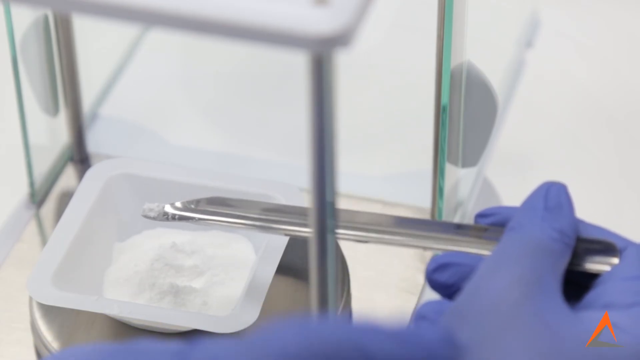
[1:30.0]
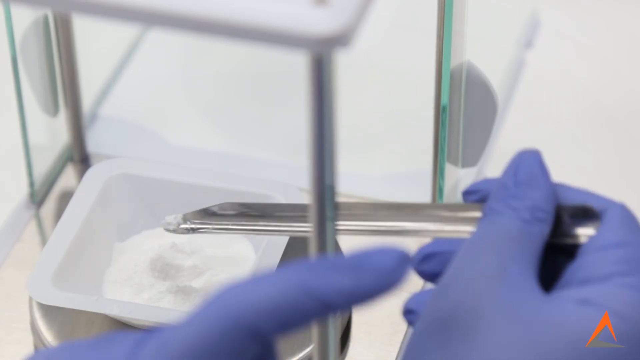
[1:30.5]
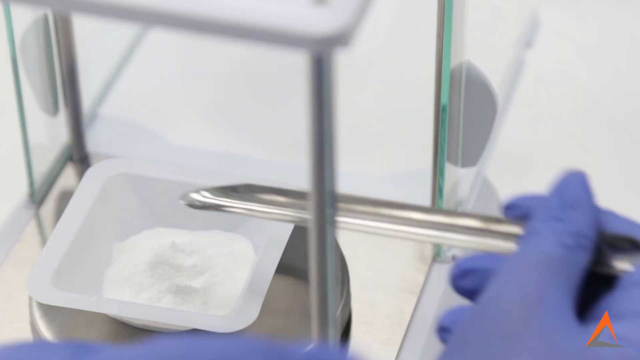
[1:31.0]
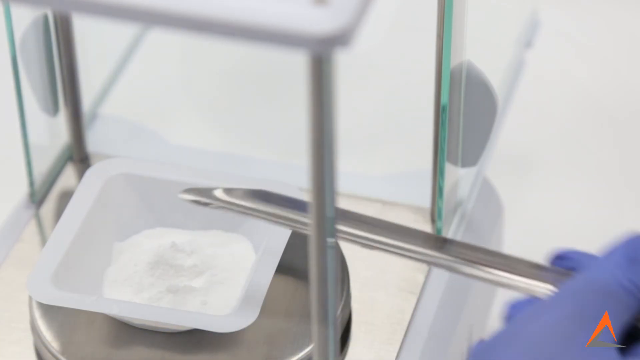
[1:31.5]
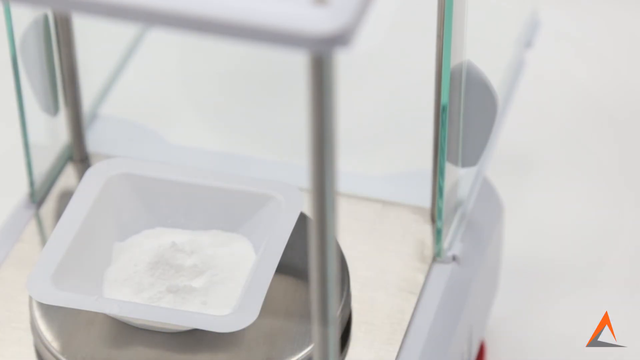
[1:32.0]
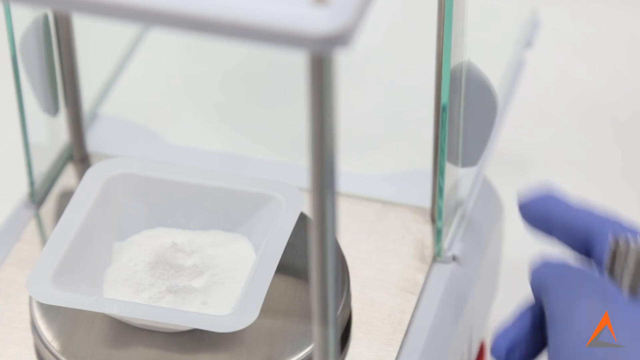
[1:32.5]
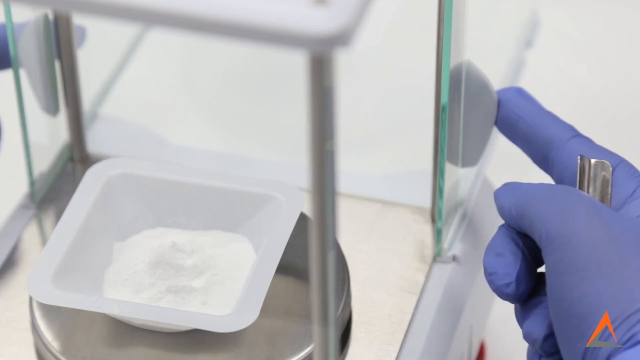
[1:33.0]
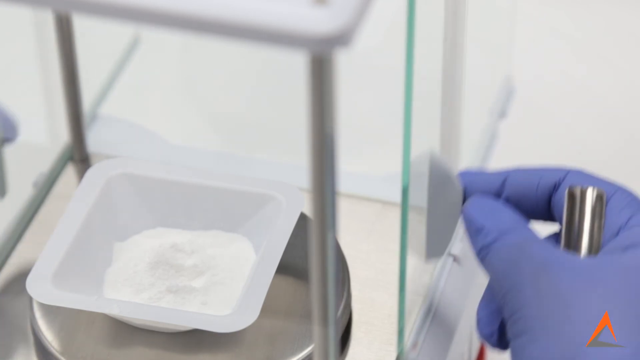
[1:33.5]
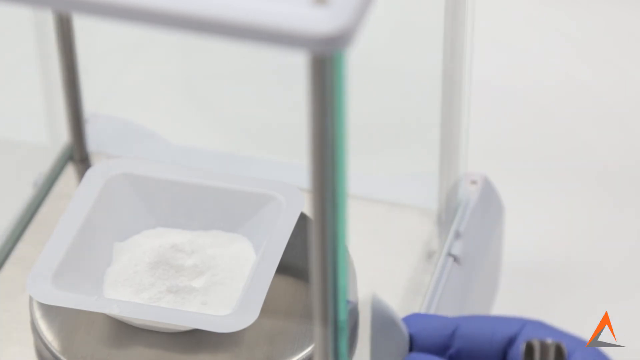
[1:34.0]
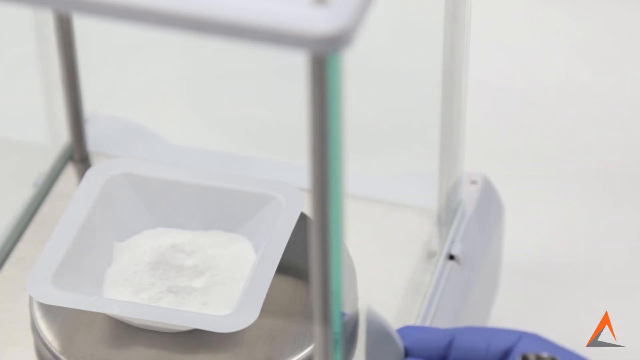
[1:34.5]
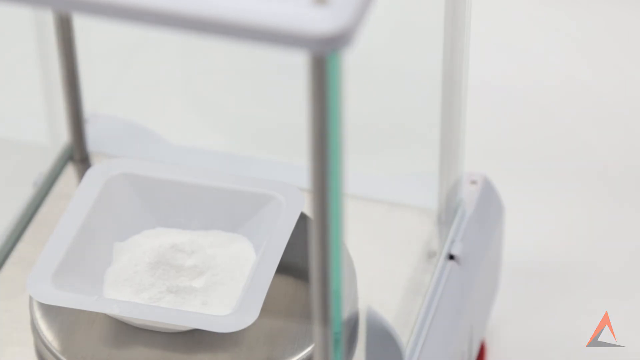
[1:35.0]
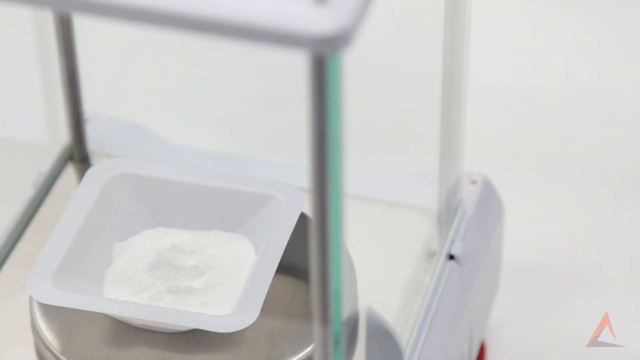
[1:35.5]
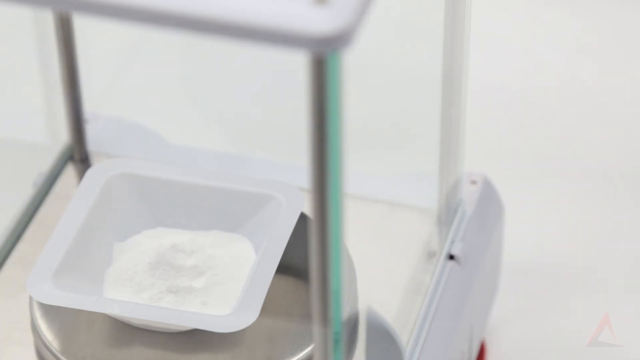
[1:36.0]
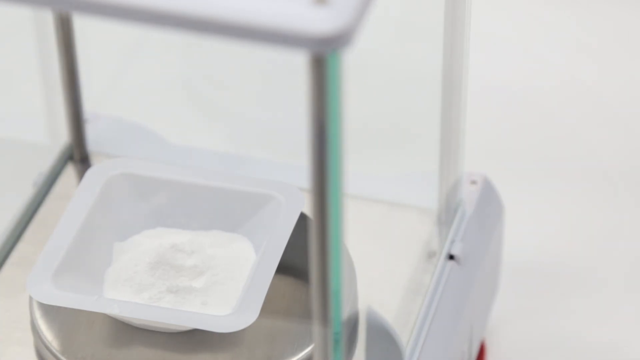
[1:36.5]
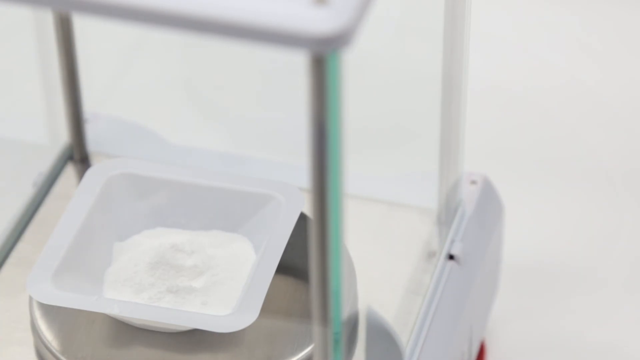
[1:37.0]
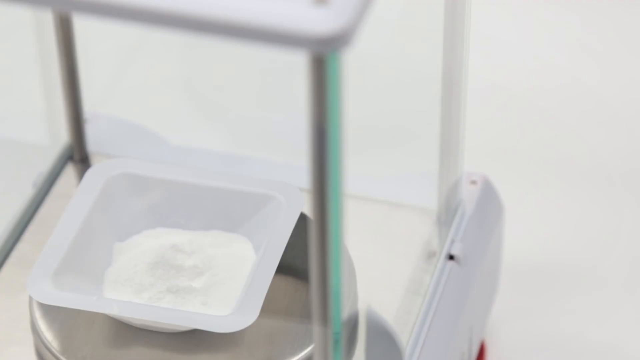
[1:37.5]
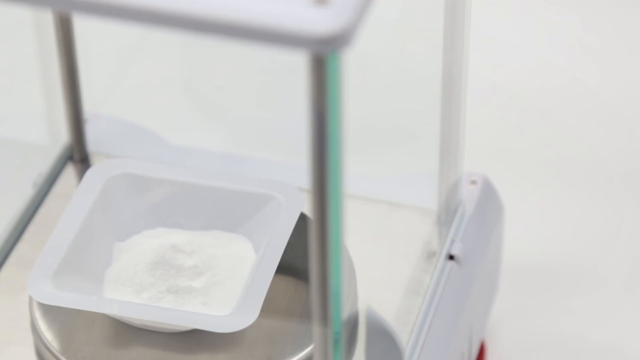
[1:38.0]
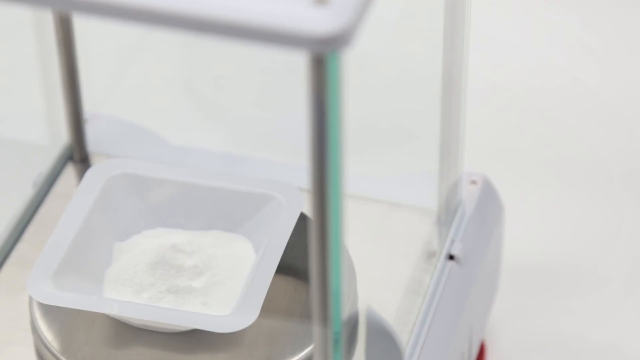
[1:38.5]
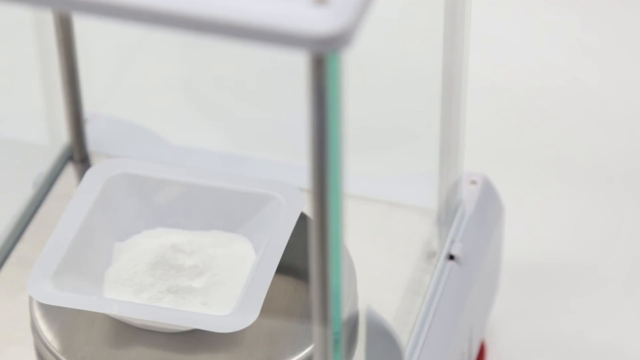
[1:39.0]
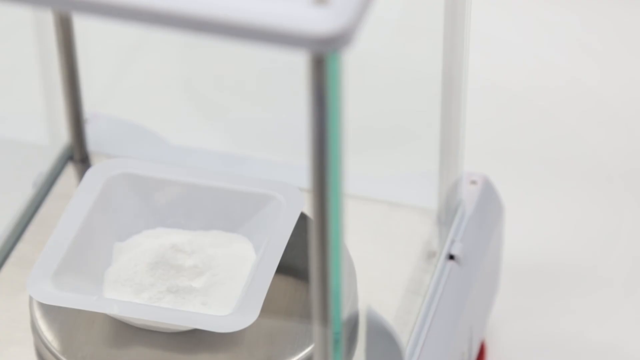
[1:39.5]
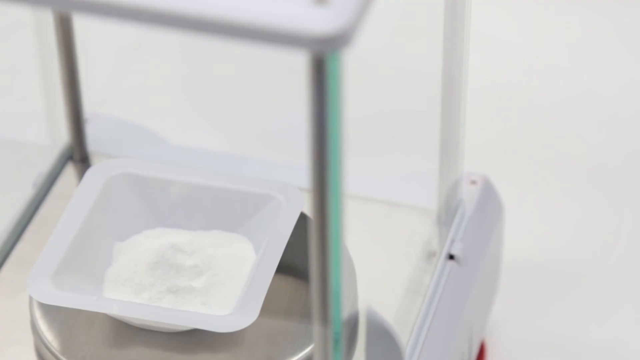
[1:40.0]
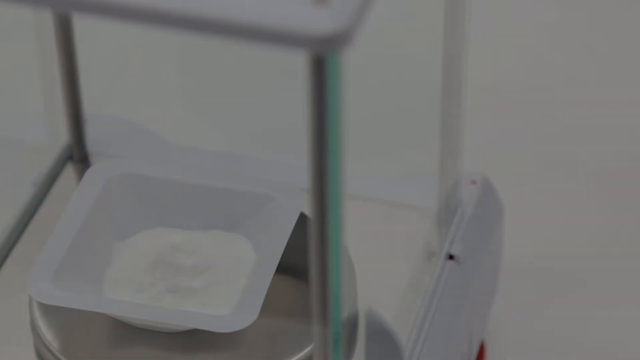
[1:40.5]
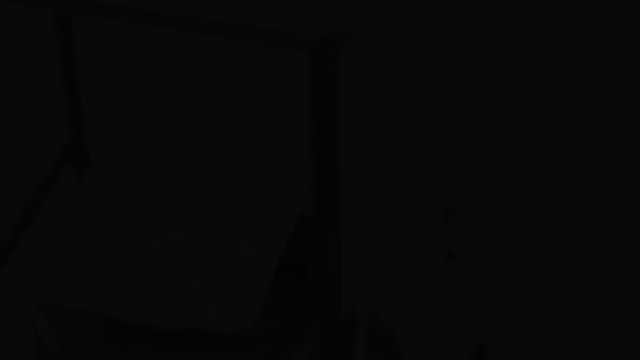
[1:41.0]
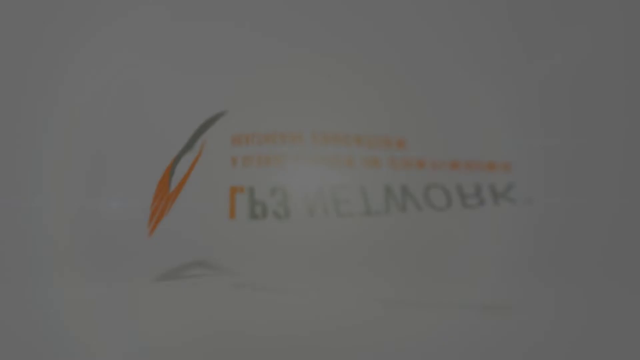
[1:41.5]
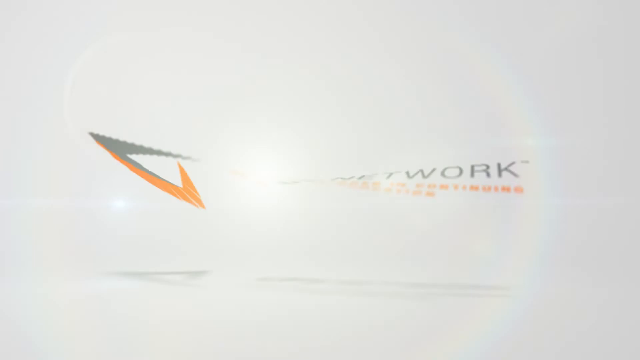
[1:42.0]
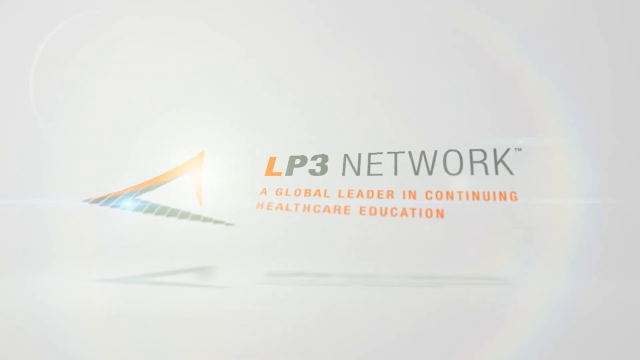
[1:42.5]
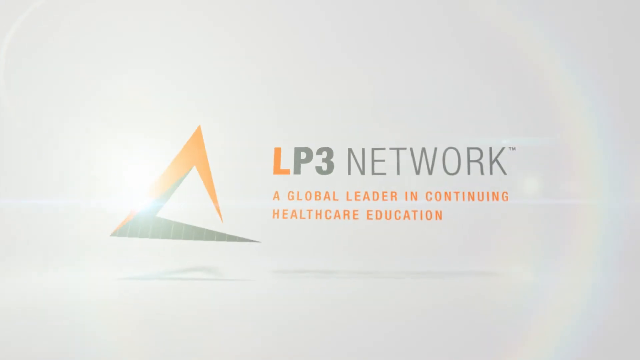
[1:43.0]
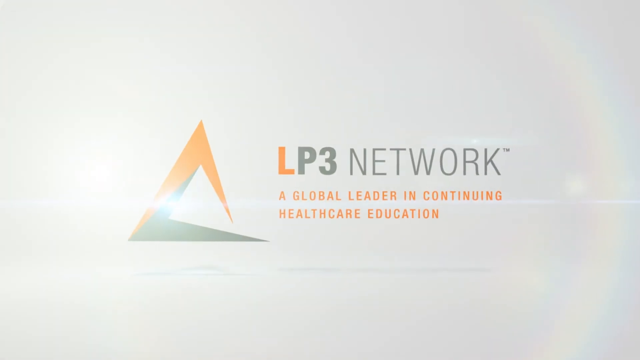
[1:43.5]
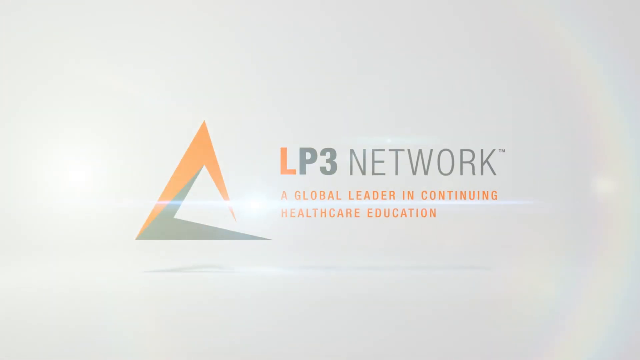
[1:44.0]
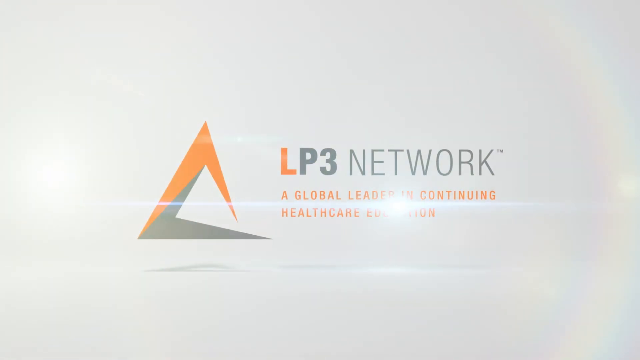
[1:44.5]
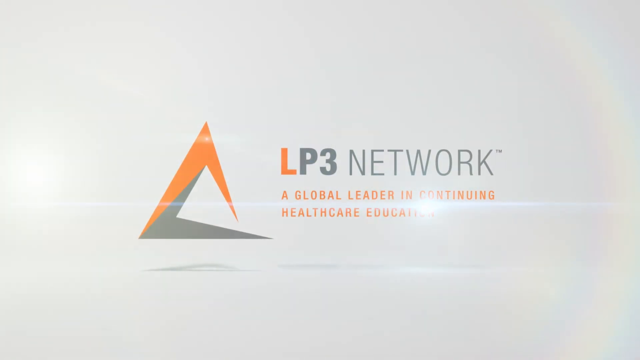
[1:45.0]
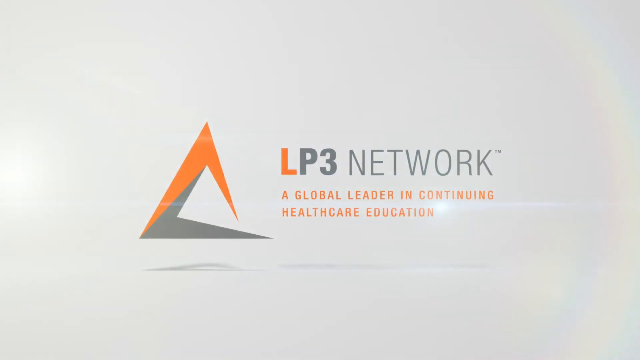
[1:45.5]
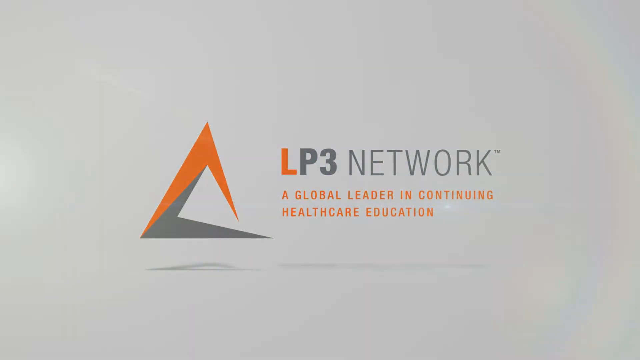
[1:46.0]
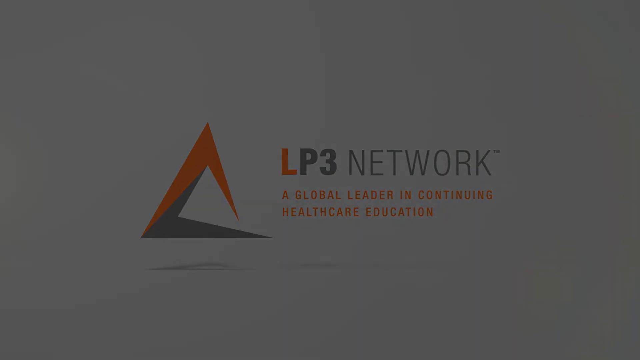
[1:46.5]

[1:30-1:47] A small, shiny, circular metallic platform is on the left side of the screen, with a small white plastic container on top containing fine white powder in its bottom. To the right, someone's right hand in a purple rubber glove holds a metallic tool over the white plastic container, with a little white powder on the tip. His hand then reaches forward above the small metal platform and closes a see-through door, apparently glass or plastic; the enclosure is see-through, and the metal platform with the plastic container on it is visible inside. The screen then turns gray, an orange triangle appears in the middle, and to its right it reads "LP3 network" with "a global leader in continuous education" underneath, in orange.